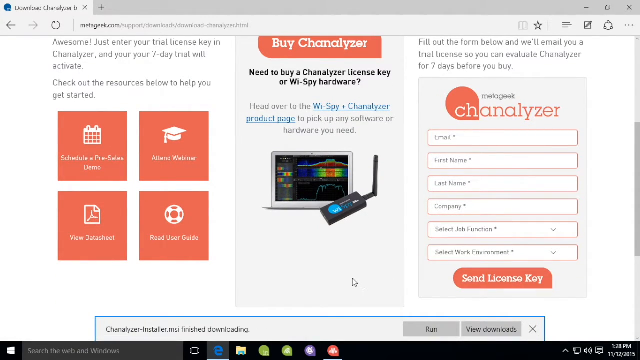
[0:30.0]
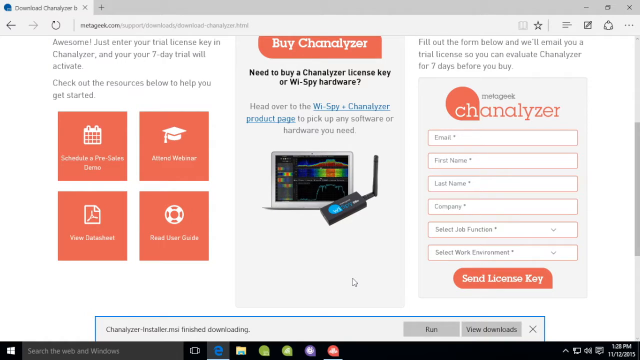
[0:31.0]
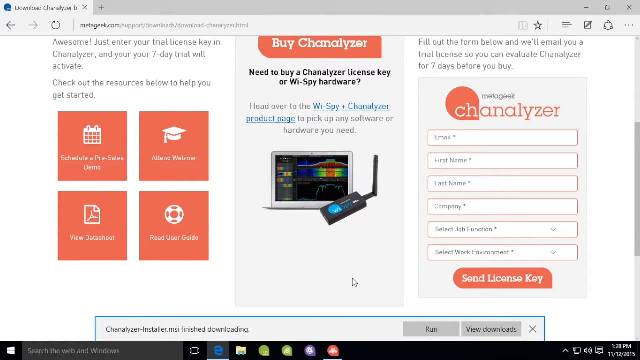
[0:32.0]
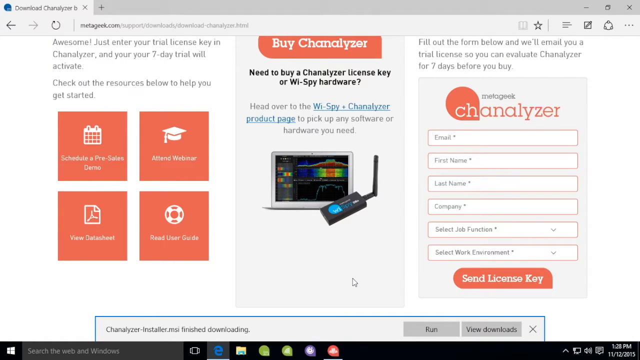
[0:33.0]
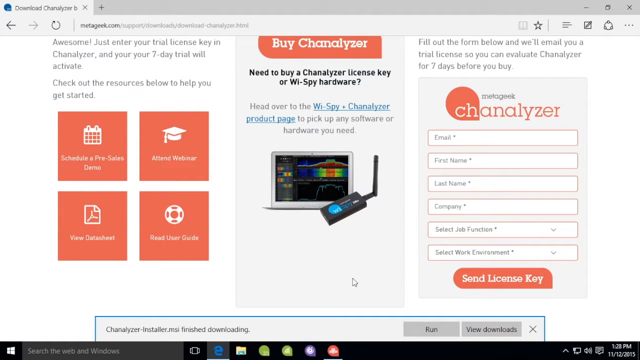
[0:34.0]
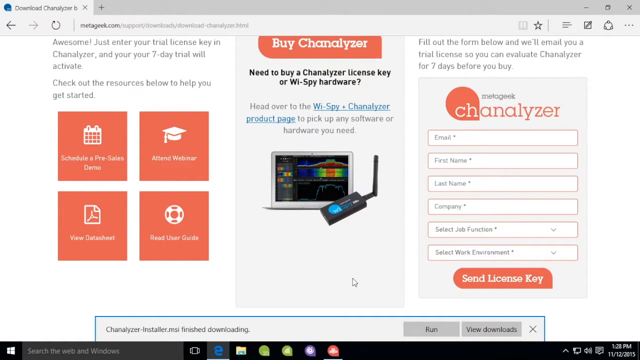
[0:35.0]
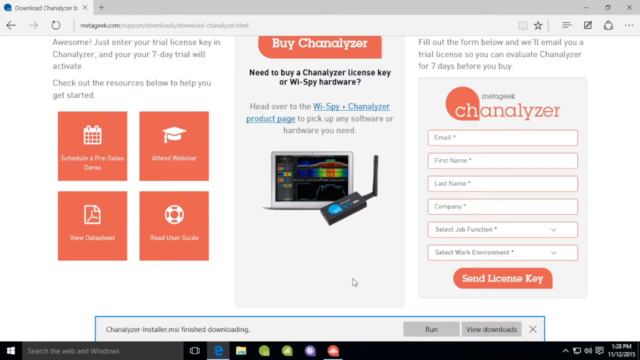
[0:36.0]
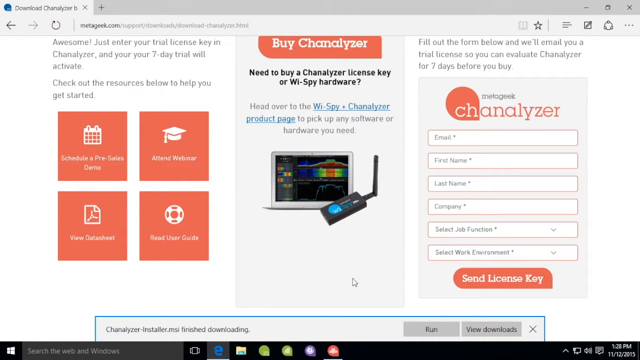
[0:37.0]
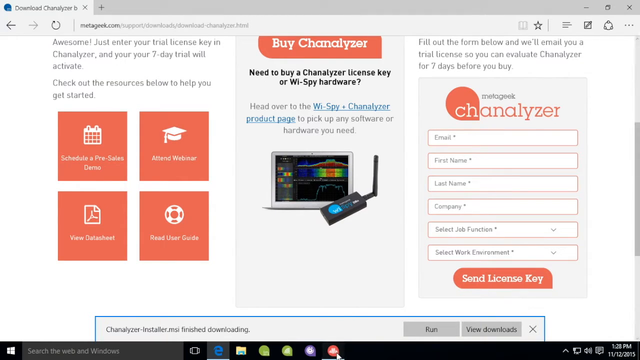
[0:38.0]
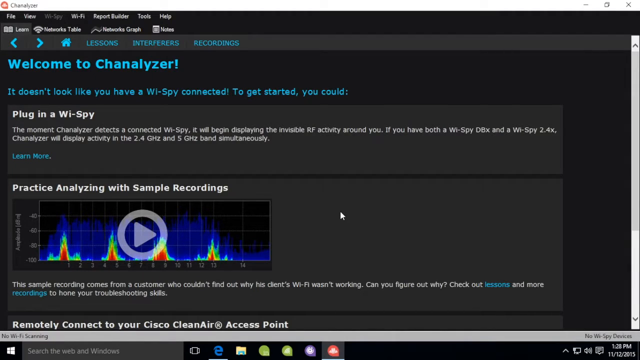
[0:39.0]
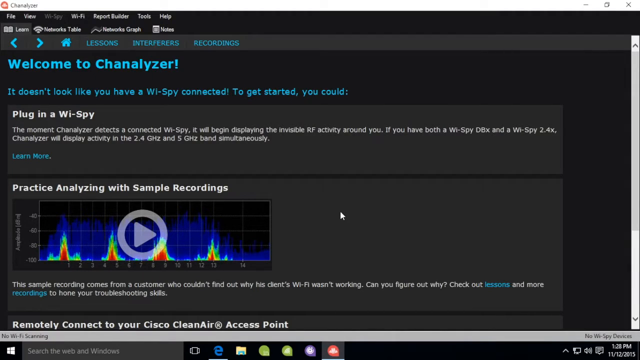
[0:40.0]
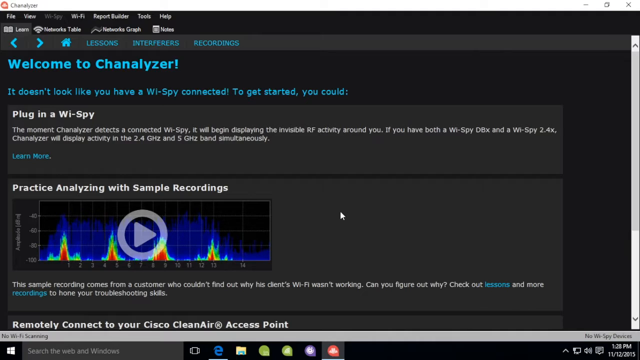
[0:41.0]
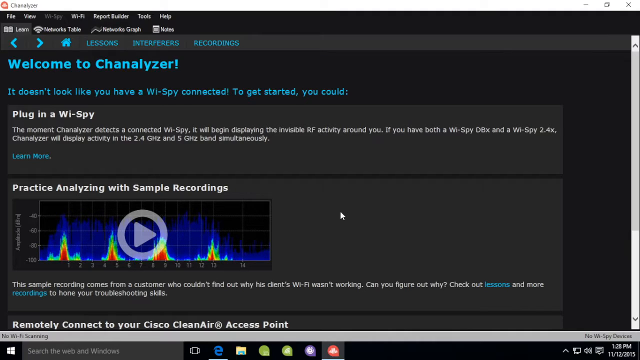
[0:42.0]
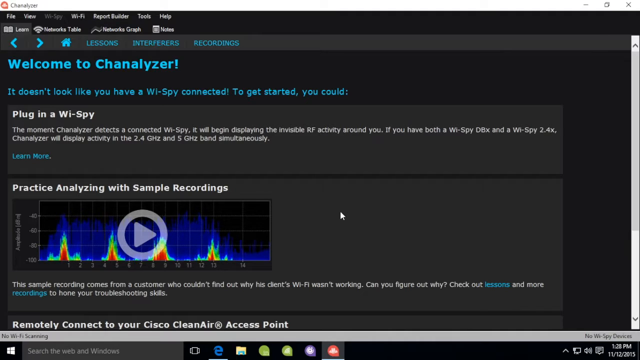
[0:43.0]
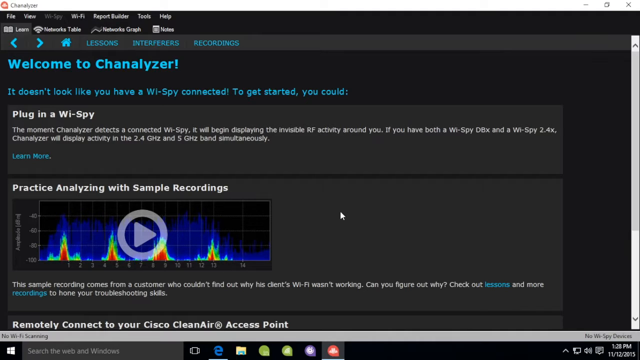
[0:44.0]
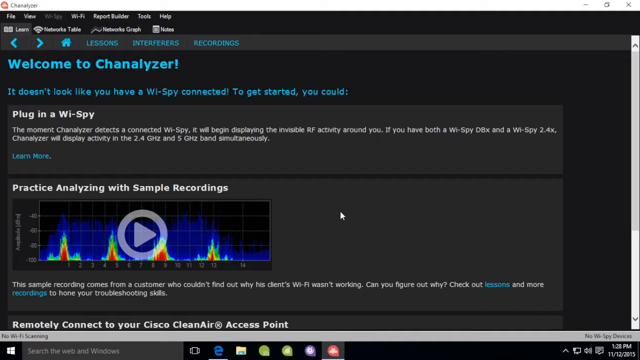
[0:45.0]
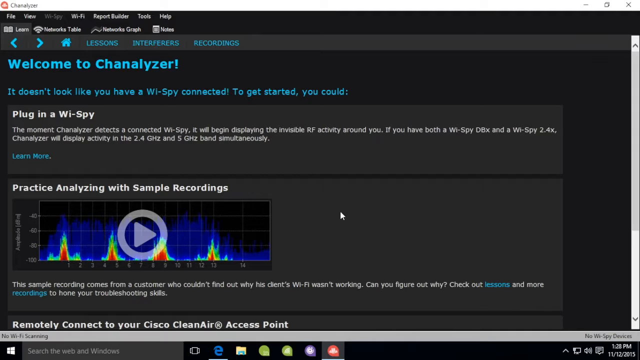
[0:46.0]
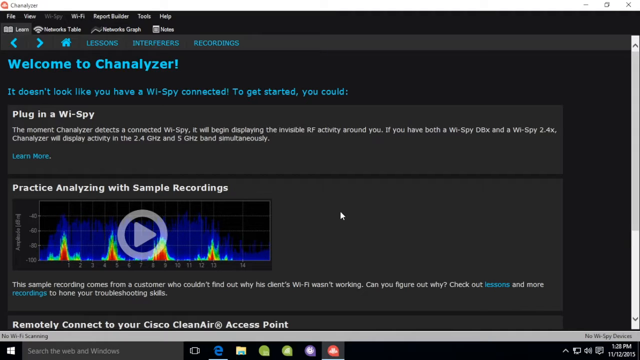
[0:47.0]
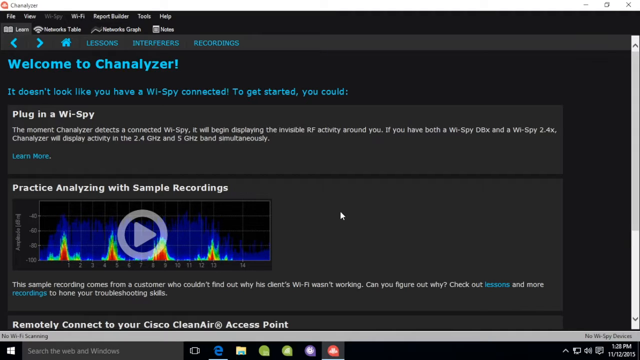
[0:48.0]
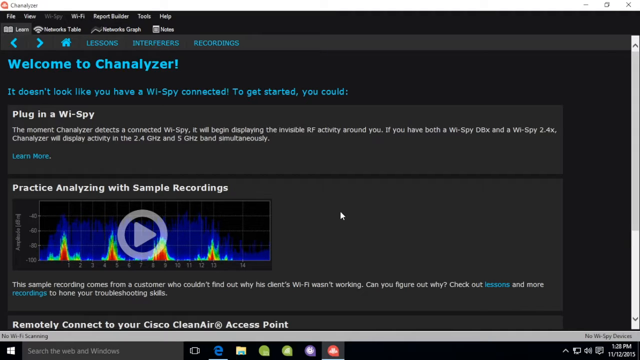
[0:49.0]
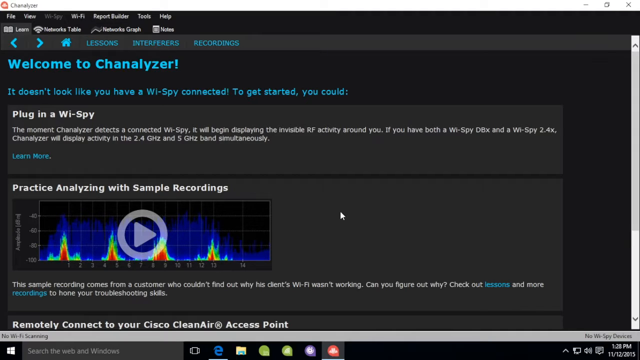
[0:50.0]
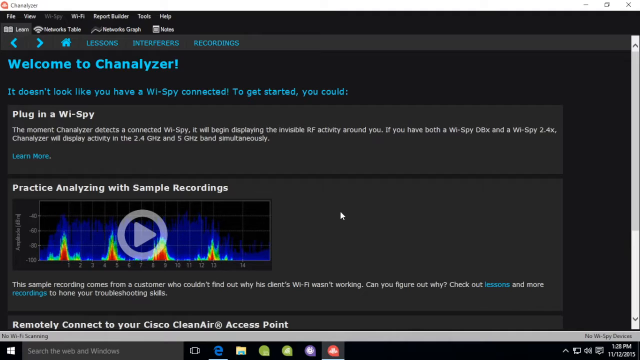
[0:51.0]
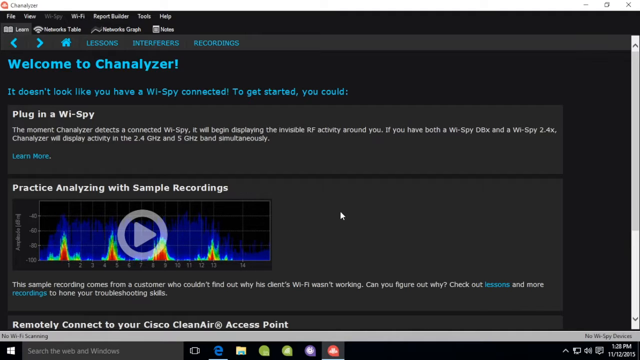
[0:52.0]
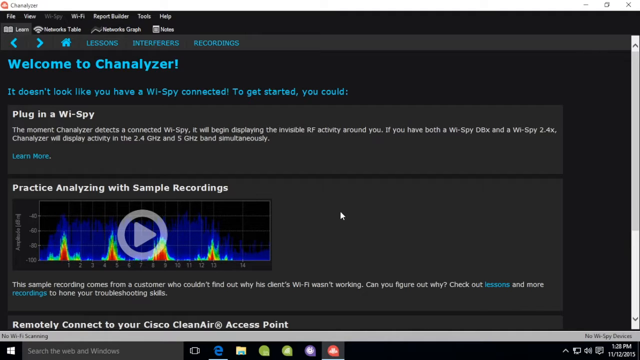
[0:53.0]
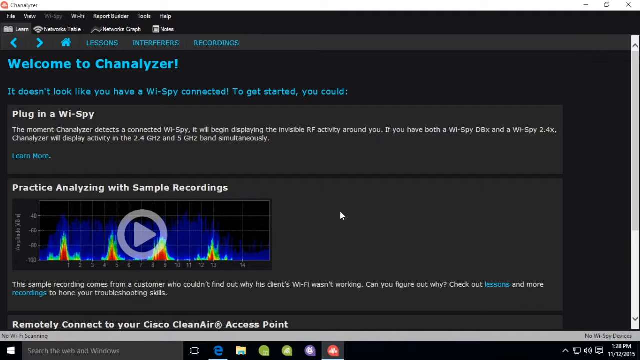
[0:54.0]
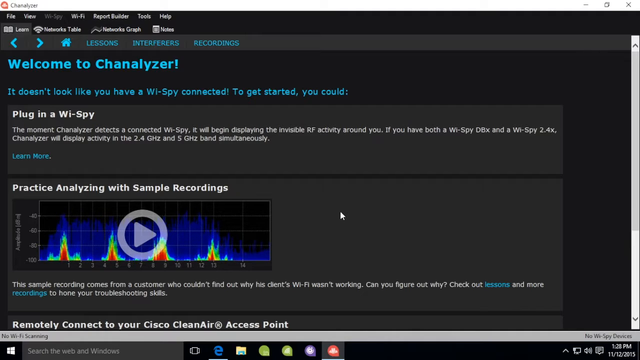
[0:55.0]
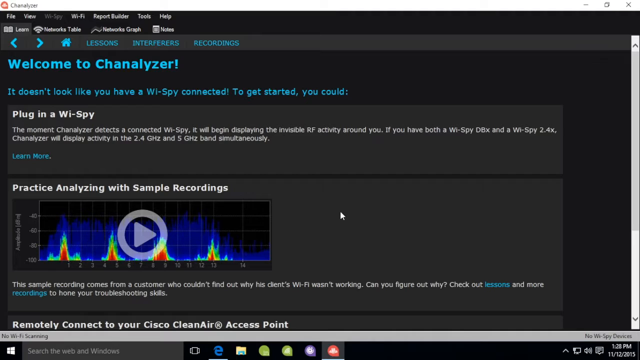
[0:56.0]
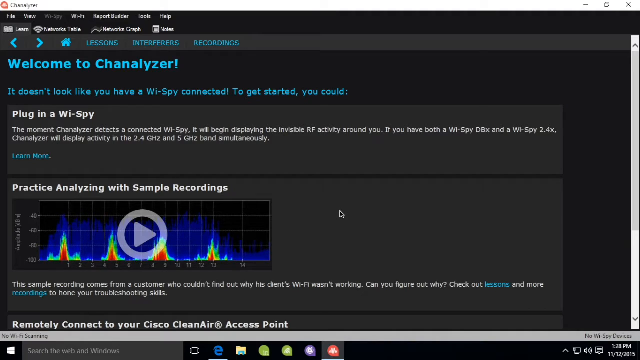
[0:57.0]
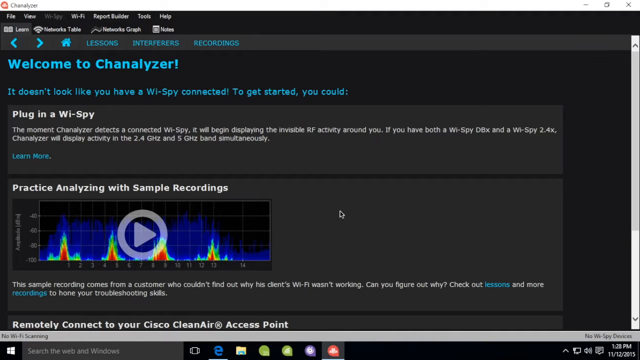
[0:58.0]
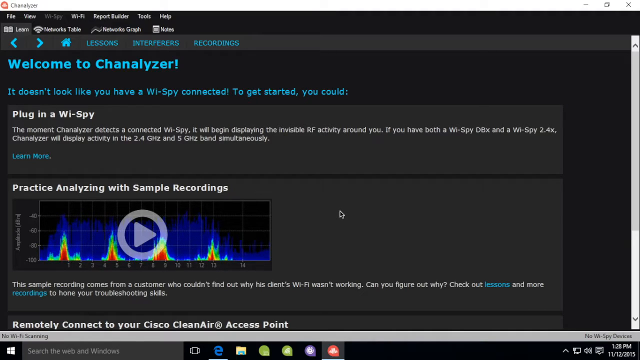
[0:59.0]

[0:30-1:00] A user license key is submitted, and the view returns to the Chanalyzer app. A Wi-Spy device is plugged in to connect and check the wireless networks in the area, showing Wi-Fi channels, frequencies and detailed information such as IP addresses. Not much action happens beyond the main screen of the Chanalyzer application.